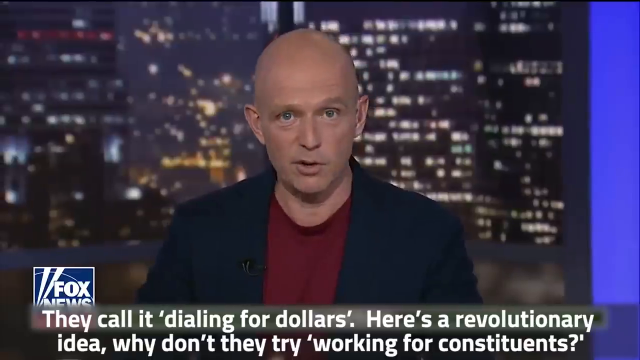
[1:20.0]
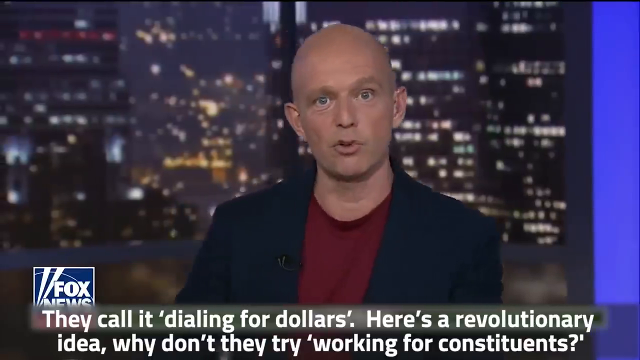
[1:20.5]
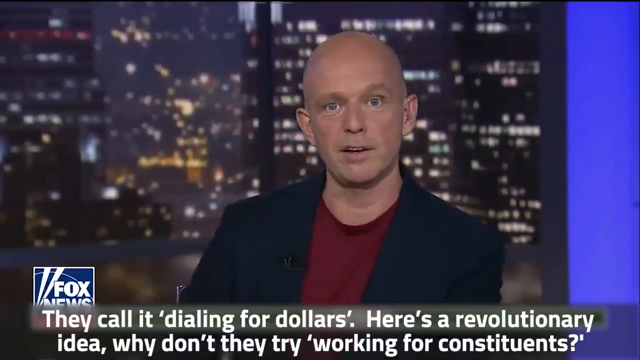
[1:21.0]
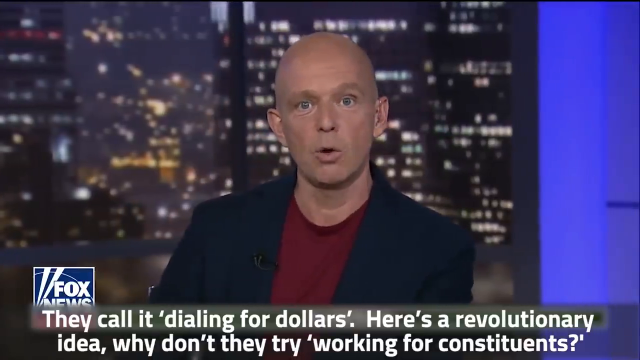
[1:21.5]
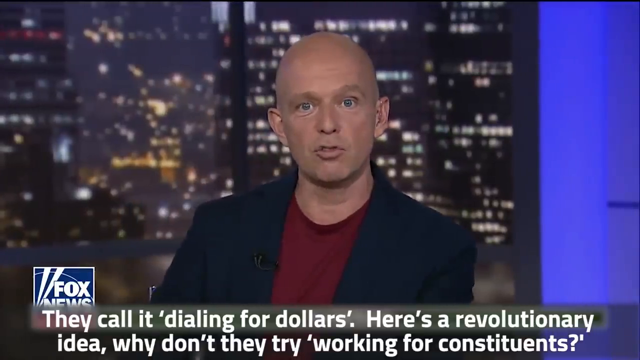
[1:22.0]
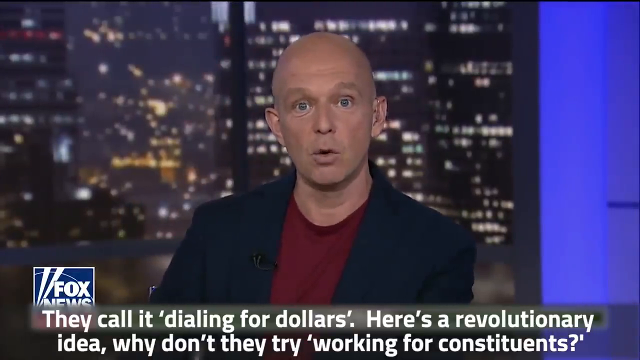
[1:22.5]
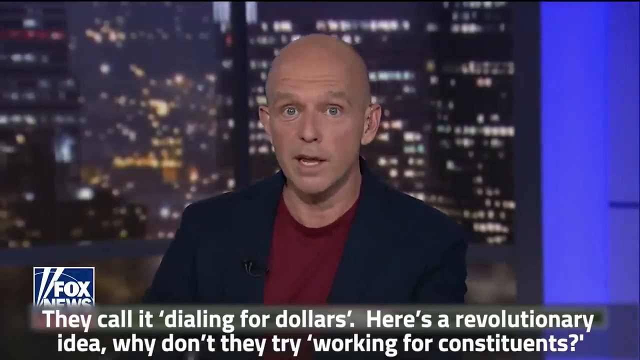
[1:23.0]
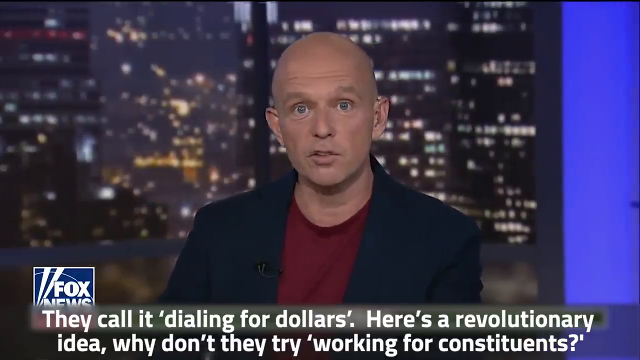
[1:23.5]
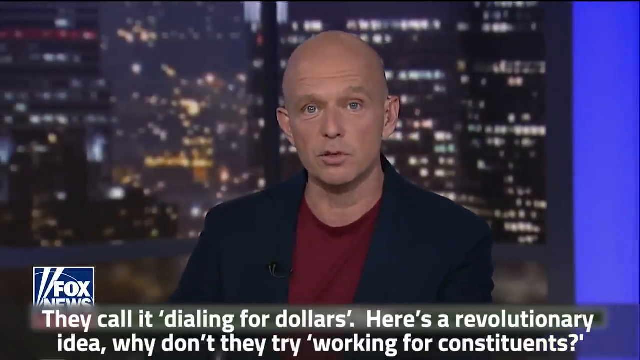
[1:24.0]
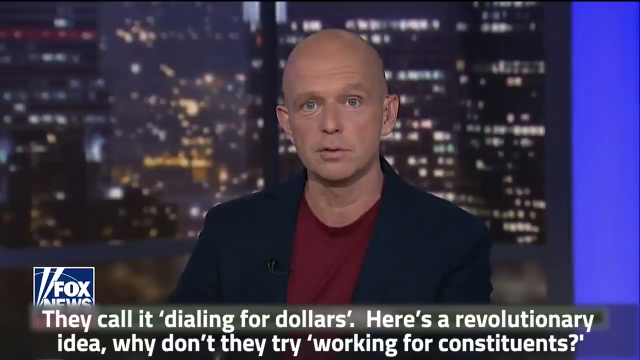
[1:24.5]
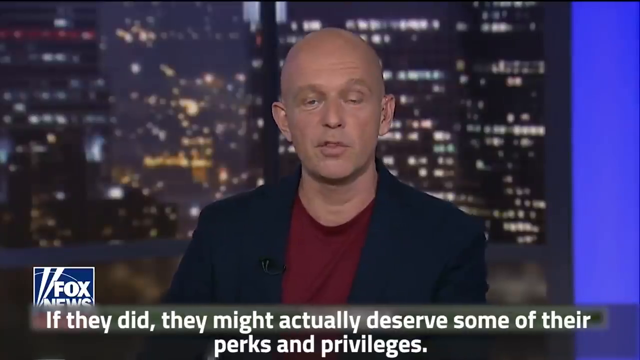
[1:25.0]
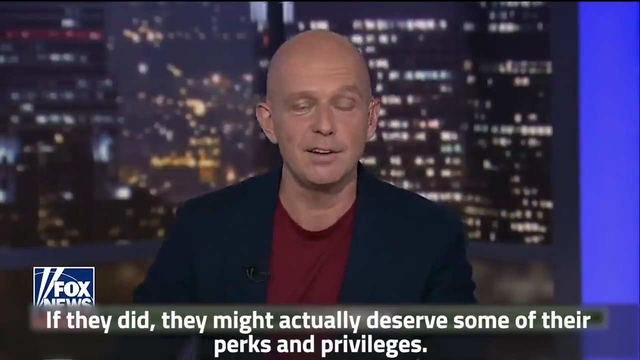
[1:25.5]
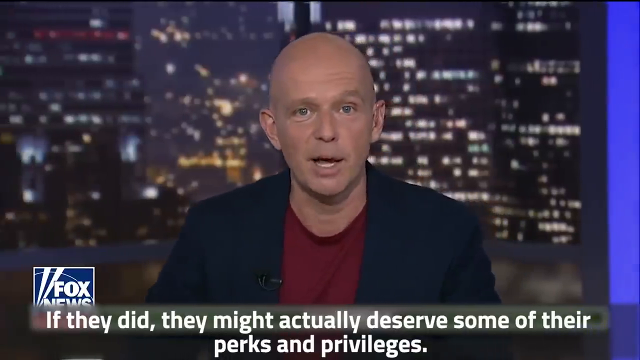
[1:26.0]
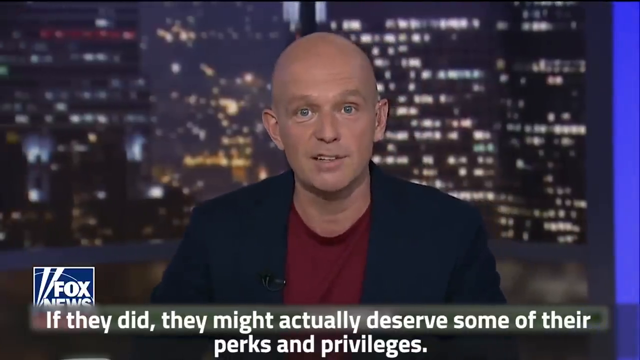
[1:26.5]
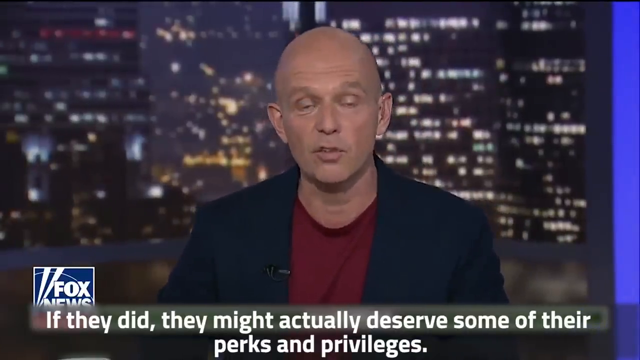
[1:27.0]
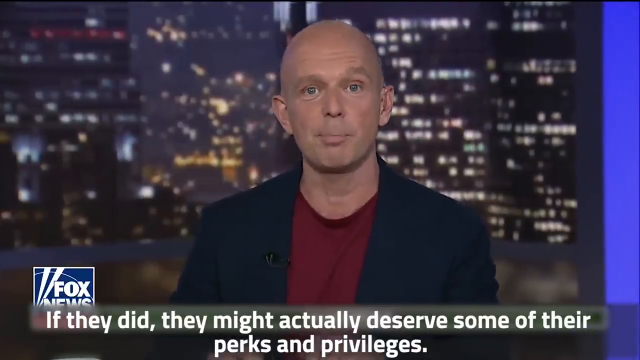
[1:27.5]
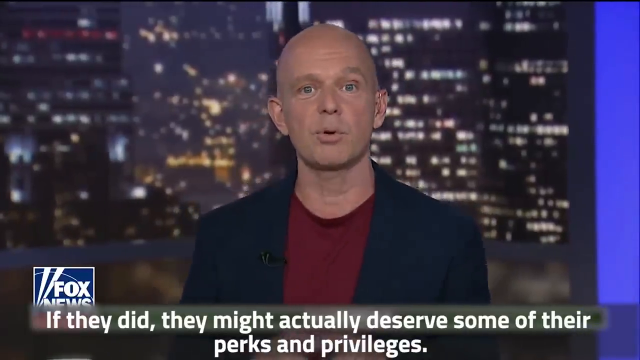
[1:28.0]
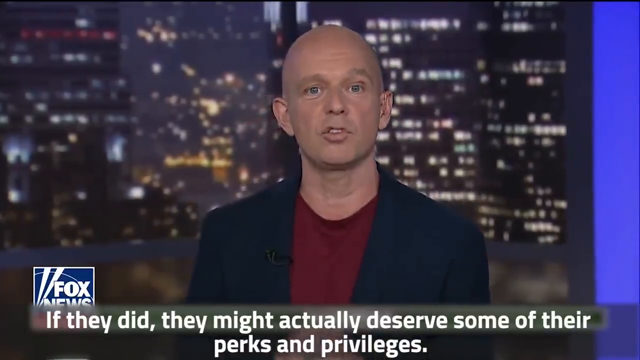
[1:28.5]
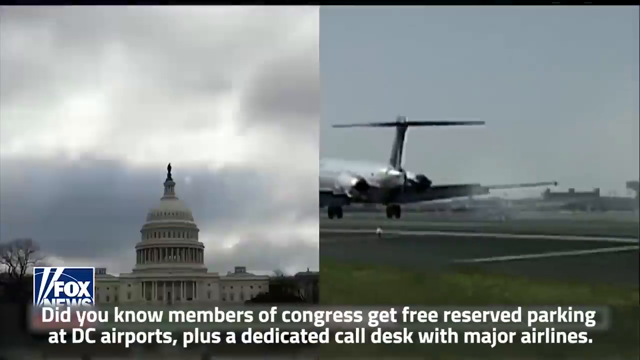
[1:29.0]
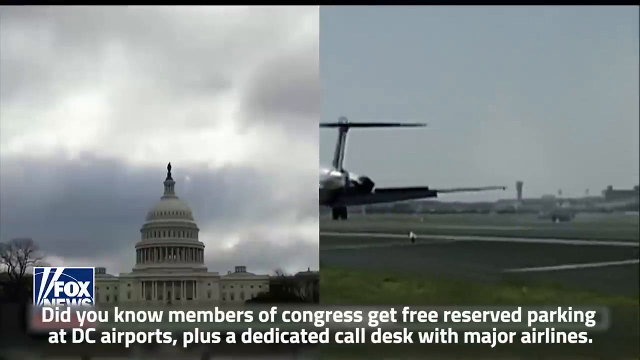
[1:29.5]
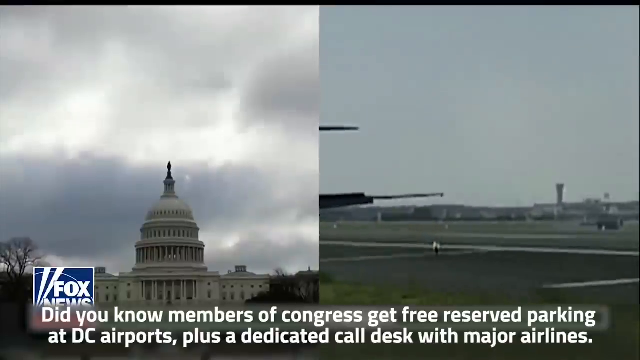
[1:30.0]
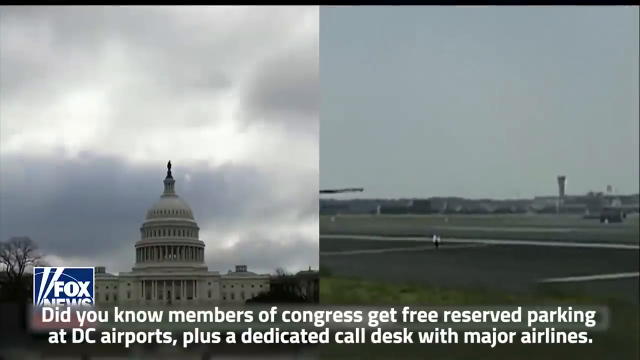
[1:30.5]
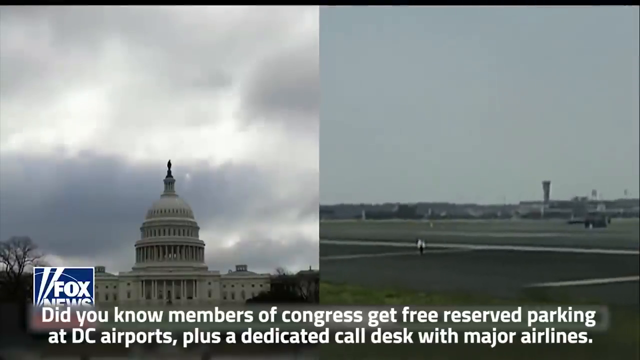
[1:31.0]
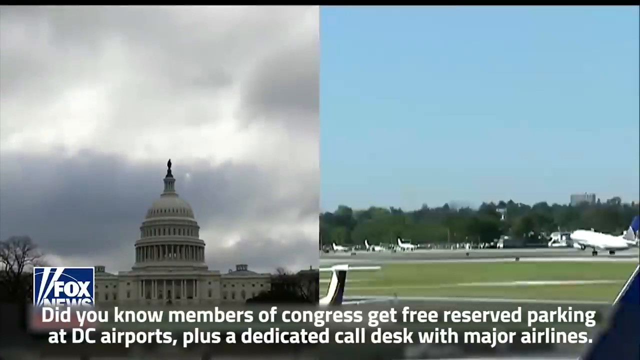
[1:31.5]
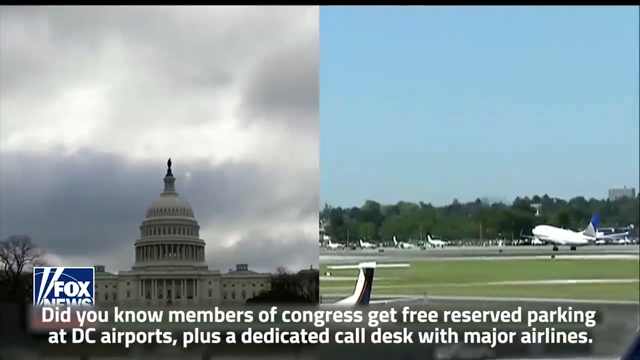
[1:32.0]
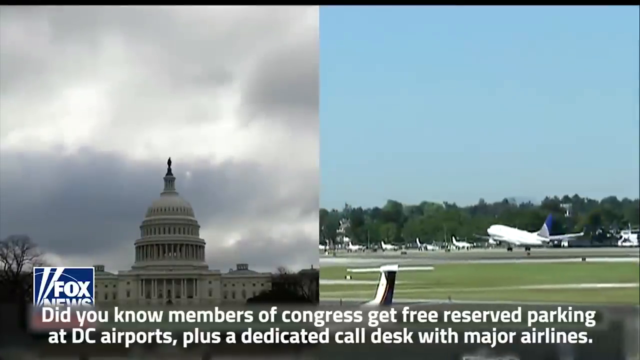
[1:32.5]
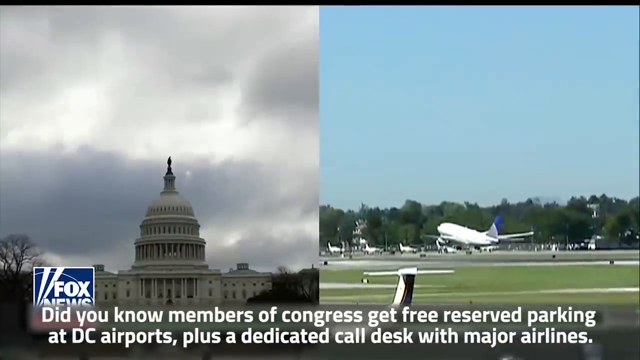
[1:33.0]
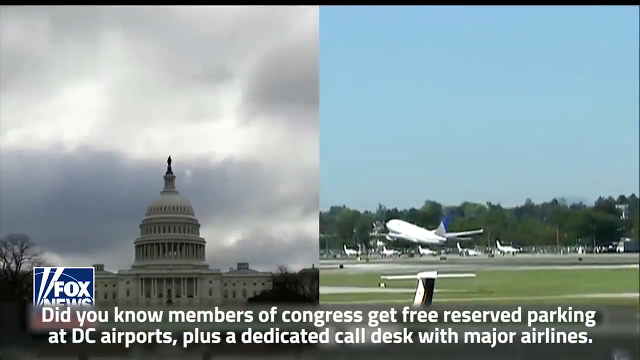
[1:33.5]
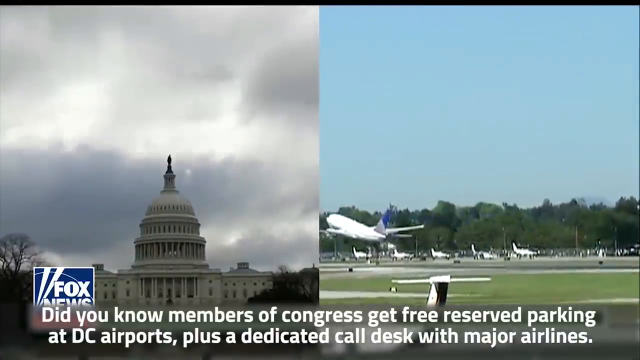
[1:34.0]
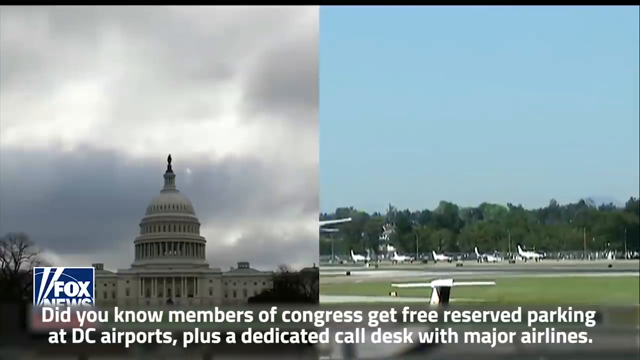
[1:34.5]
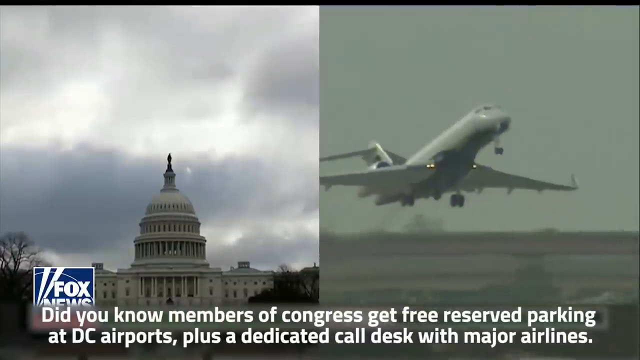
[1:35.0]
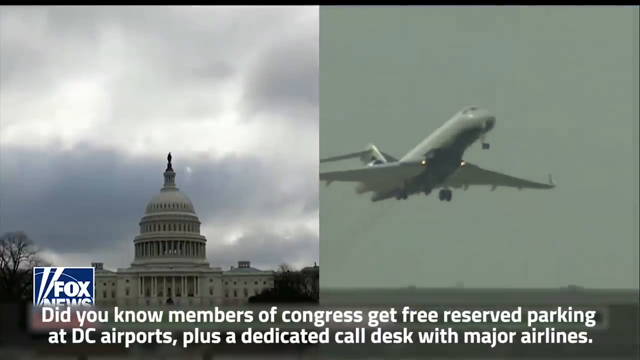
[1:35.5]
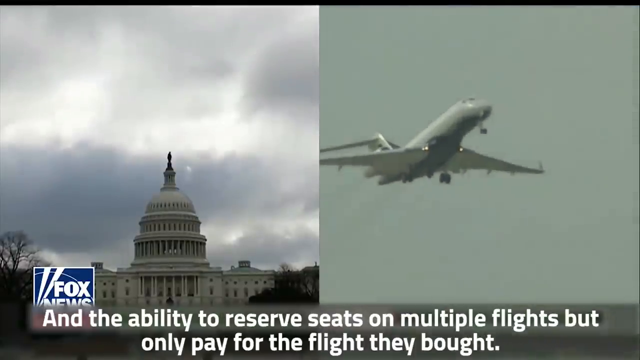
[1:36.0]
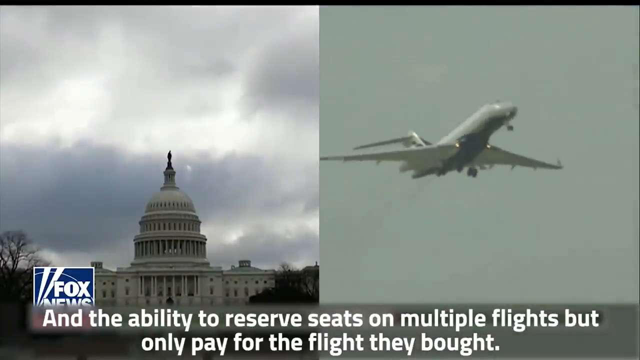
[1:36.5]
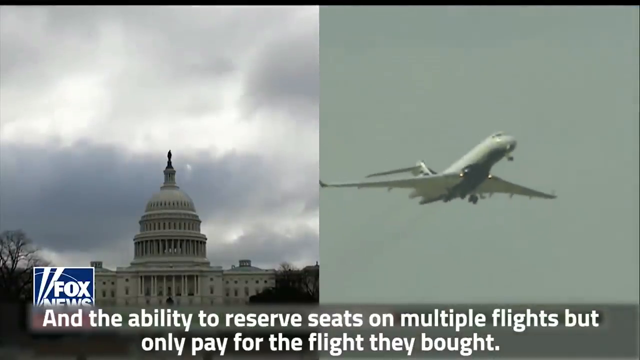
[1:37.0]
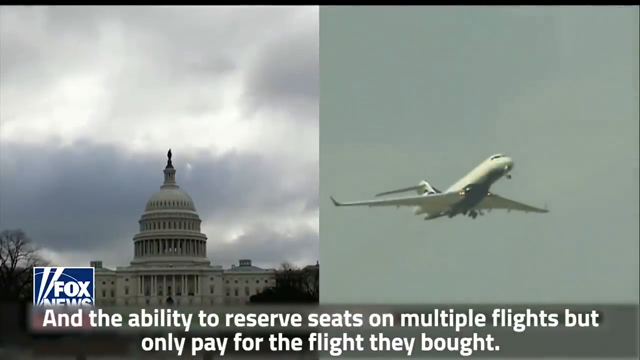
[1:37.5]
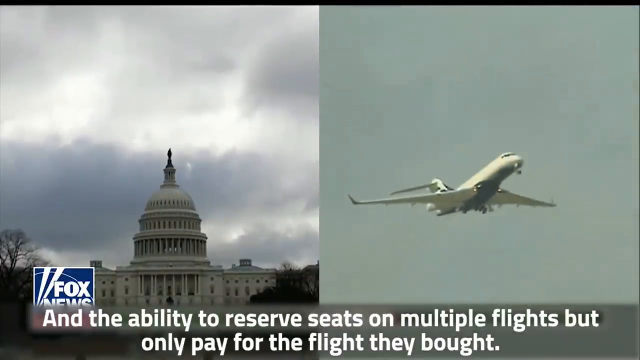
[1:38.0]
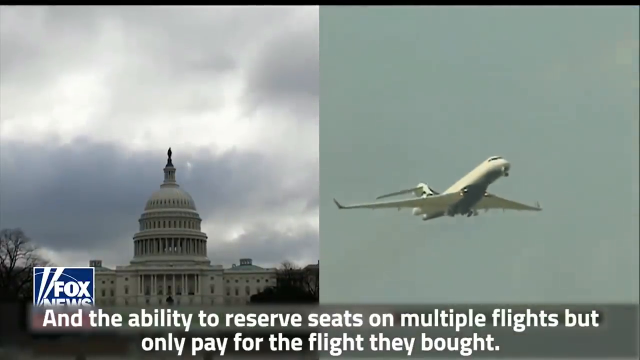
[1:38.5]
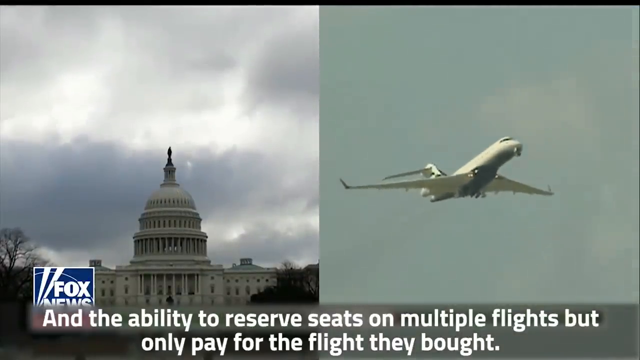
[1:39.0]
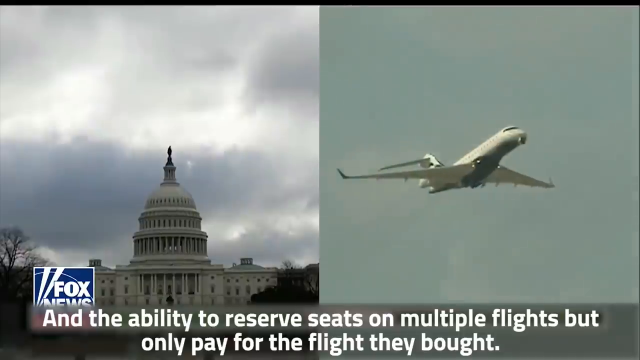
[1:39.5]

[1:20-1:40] The Fox News presenter is shown on TV with a night background of street lights and buildings. The presenter wears a maroon shirt and a blue blazer and is bald-headed. The screen is divided into two: one part shows the presenter, and the right side shows quotes from The Huff Post, headlined "Call time for Congress shows how fundraising dominates bleak work life," dated January 2013. A model daily schedule for DC is also shown: four hours of call time, one to two hours of constituent visits, two hours of committee floor, one hour of strategic outreach including breakfast, meet and greet, and press, and another hour of recharge time.